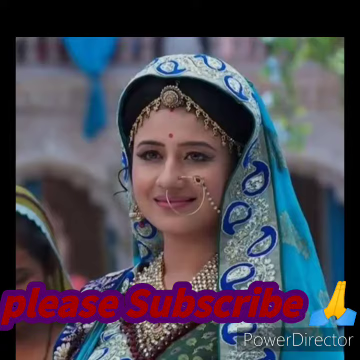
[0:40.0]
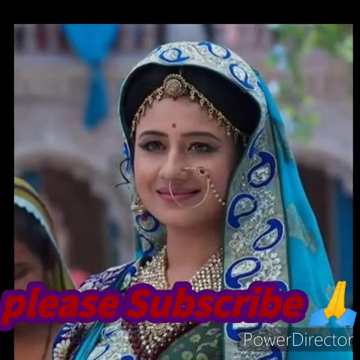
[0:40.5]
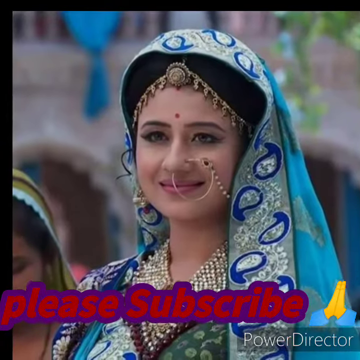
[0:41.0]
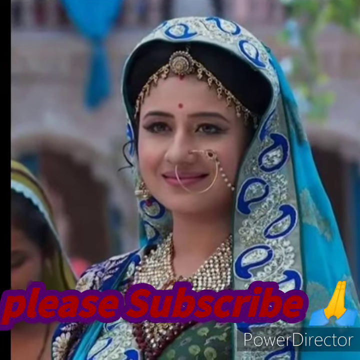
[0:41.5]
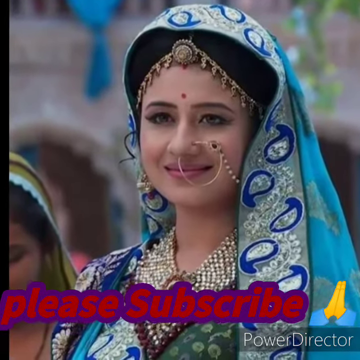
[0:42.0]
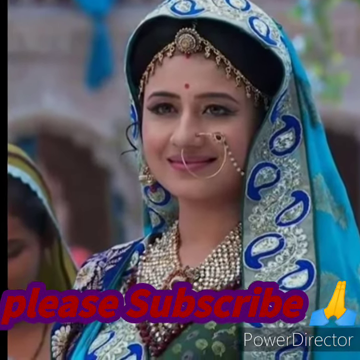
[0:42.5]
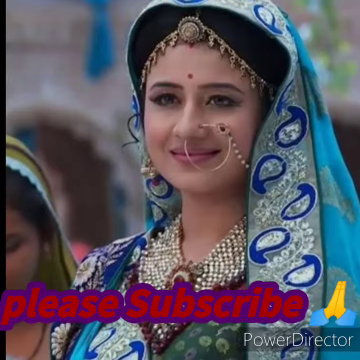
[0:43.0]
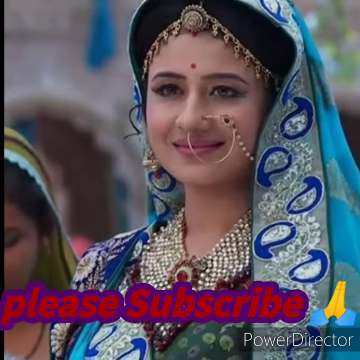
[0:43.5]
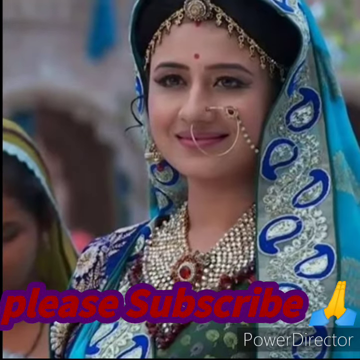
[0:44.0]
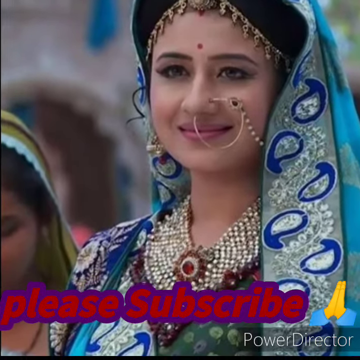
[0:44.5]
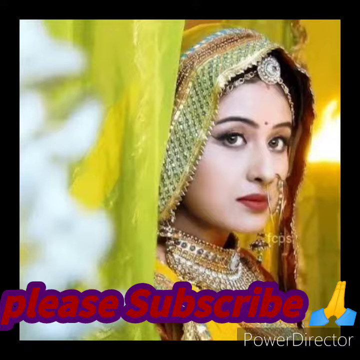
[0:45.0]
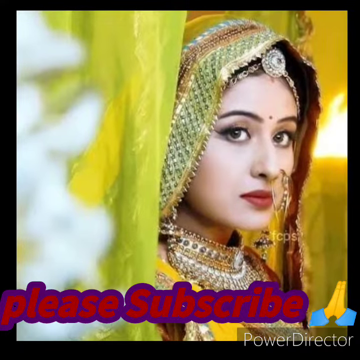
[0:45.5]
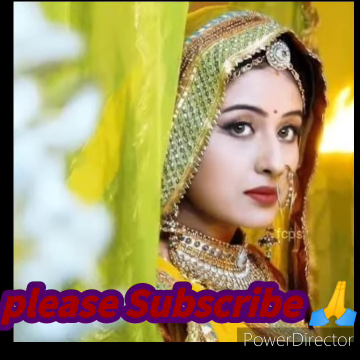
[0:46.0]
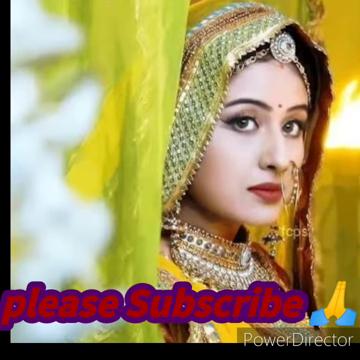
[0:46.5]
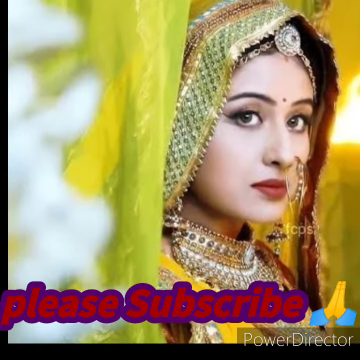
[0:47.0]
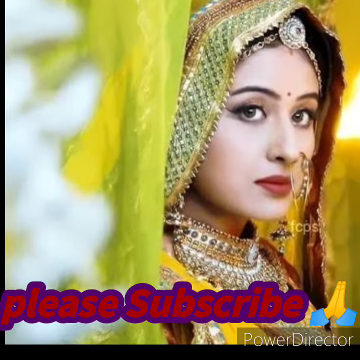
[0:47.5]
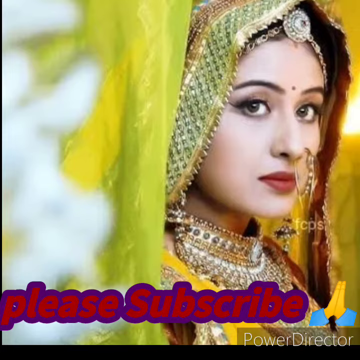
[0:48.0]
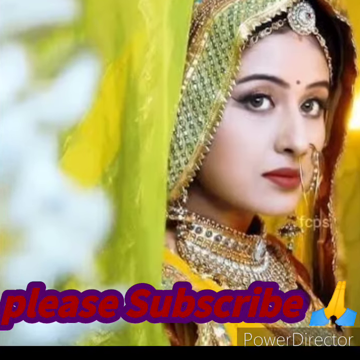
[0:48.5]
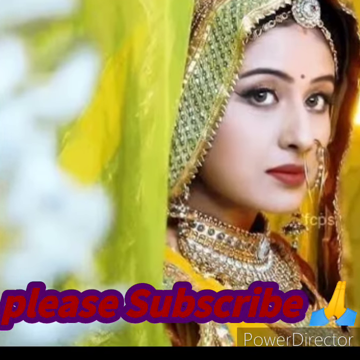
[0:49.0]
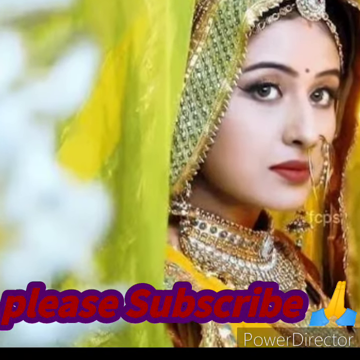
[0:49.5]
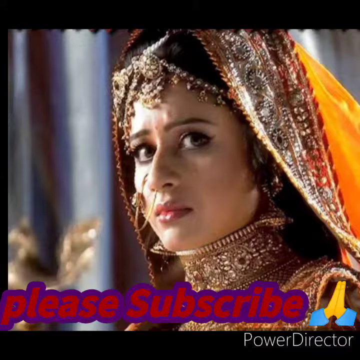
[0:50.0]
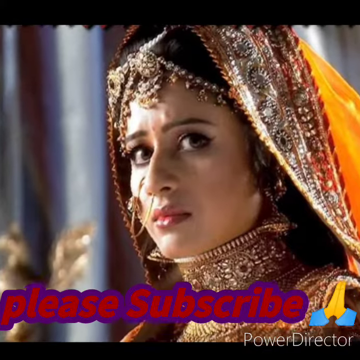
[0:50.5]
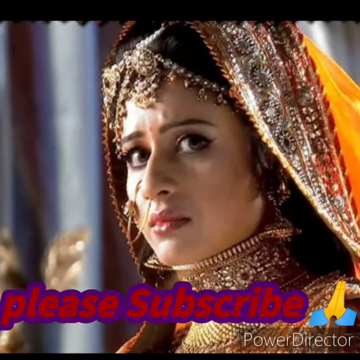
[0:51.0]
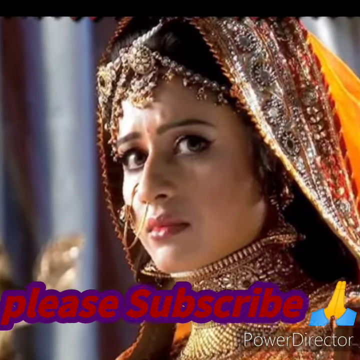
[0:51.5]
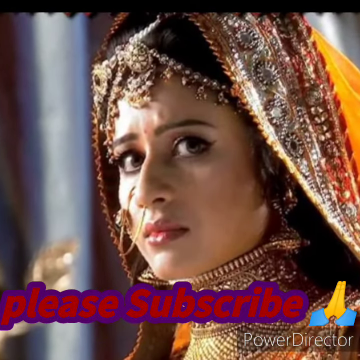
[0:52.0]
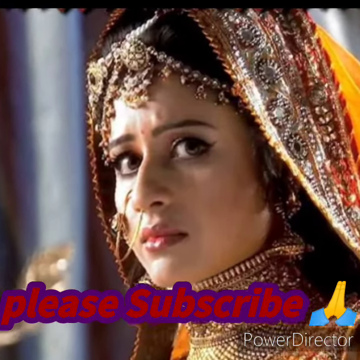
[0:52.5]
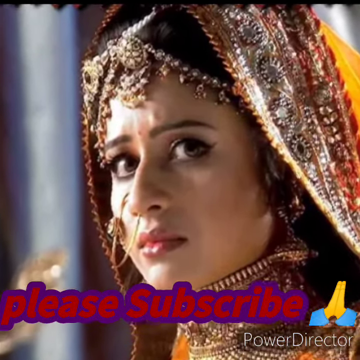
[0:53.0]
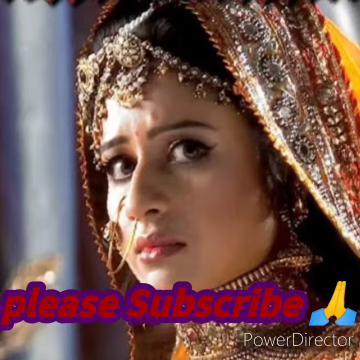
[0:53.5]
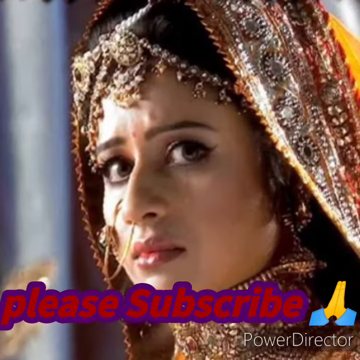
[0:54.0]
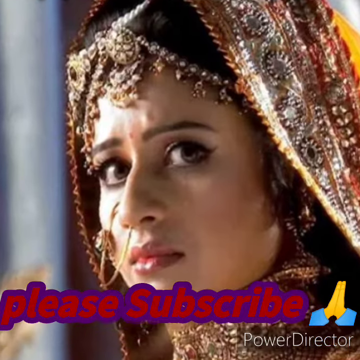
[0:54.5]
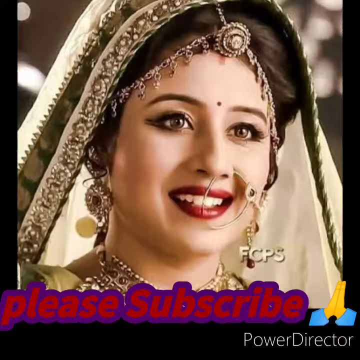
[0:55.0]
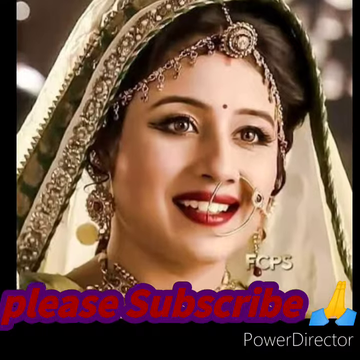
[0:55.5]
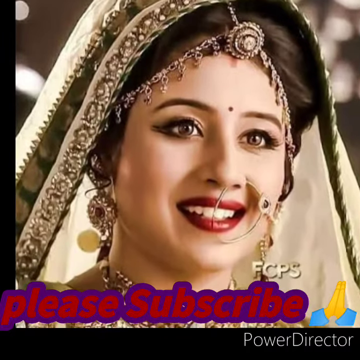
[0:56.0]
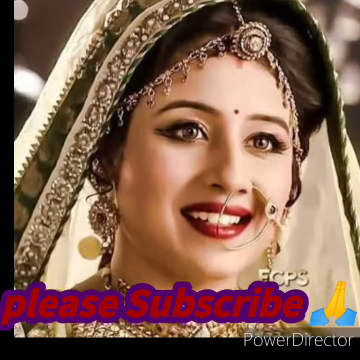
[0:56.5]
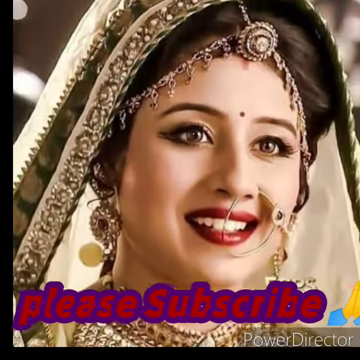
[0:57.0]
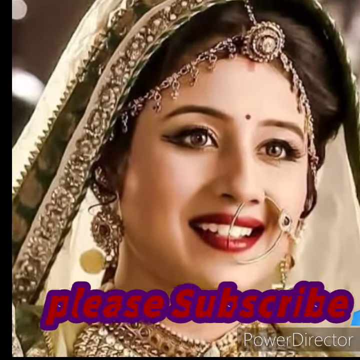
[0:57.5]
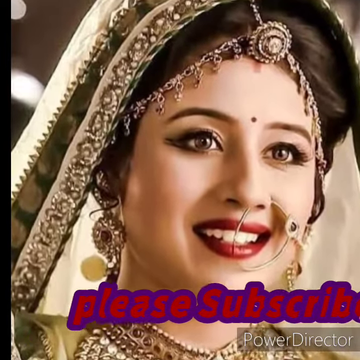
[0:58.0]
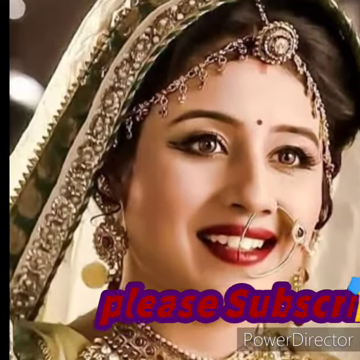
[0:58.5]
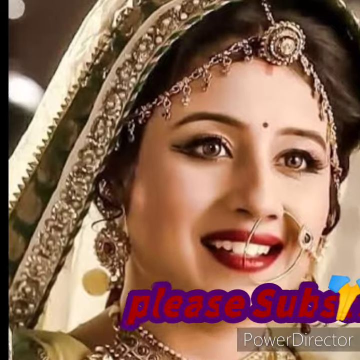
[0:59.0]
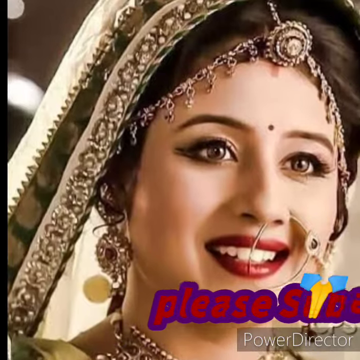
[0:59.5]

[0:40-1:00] A woman in traditional Indian clothing has a blue scarf draped around her head, a red dot in the middle of her forehead, and a huge hoop in her nose attached to a chain that goes to her ear. She is smiling and wears a gold necklace. A woman in yellow and gold also has a hoop in her nose attached to her earring, a red dot, and a gold necklace; she is kind of peeking out from behind a yellow curtain with a slight smile. Another woman wears a darkish gold color and a kind of turtleneck-style jewelry piece, with a hoop nose ring attached to her ear. She is not smiling and has kind of a mean look. Another woman wears whitish-tan Indian clothing, with a dot on her forehead, bright red lipstick, and a large hoop nose piercing attached to gold earrings. She is smiling, showing her teeth, and looks very happy.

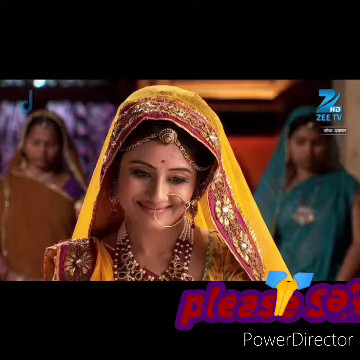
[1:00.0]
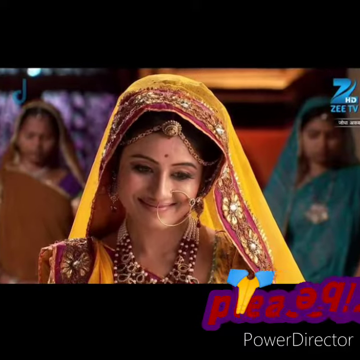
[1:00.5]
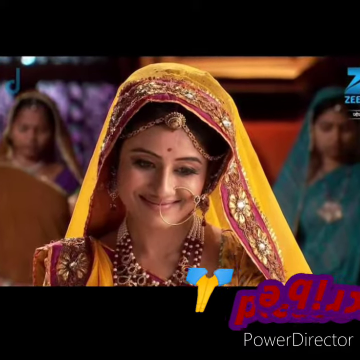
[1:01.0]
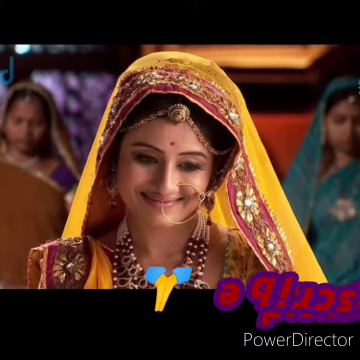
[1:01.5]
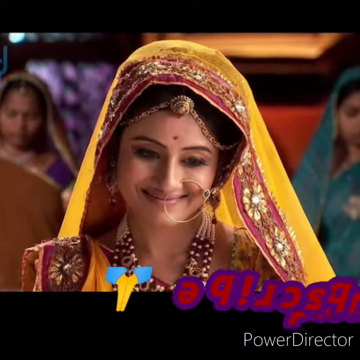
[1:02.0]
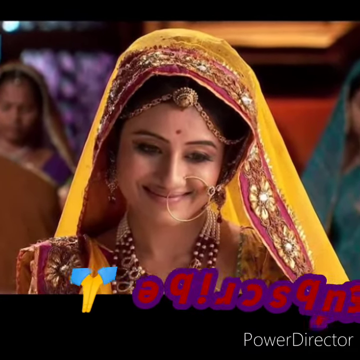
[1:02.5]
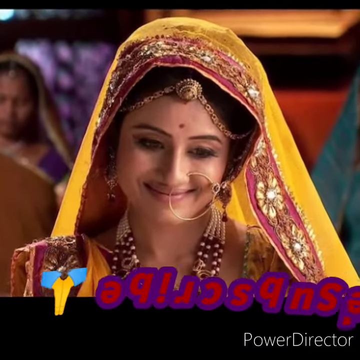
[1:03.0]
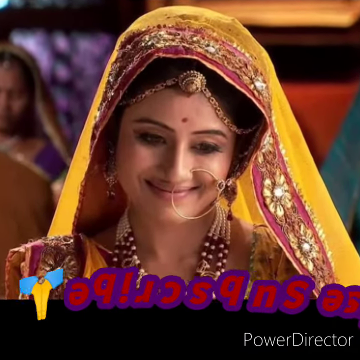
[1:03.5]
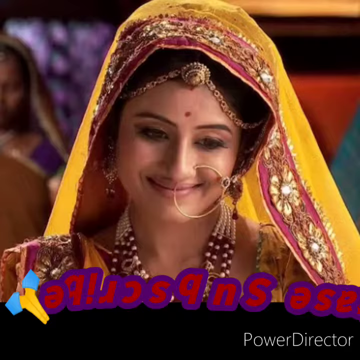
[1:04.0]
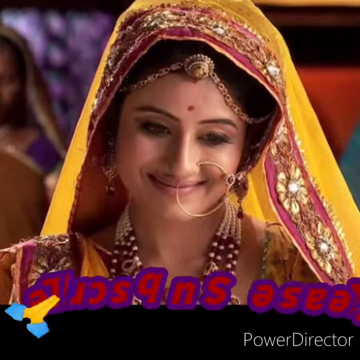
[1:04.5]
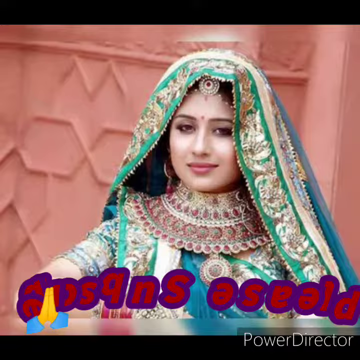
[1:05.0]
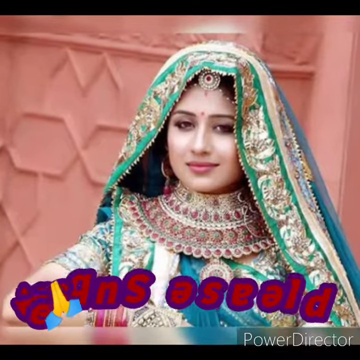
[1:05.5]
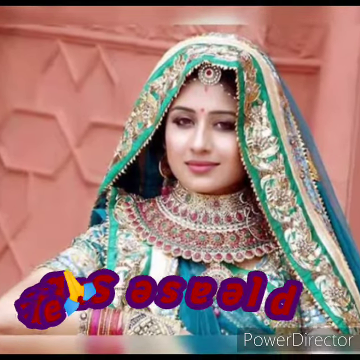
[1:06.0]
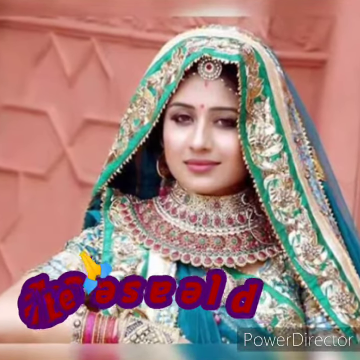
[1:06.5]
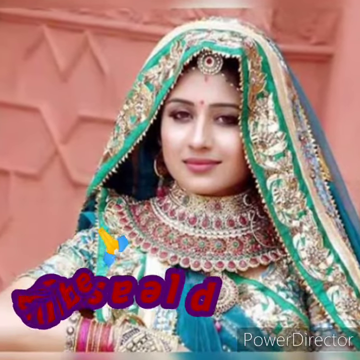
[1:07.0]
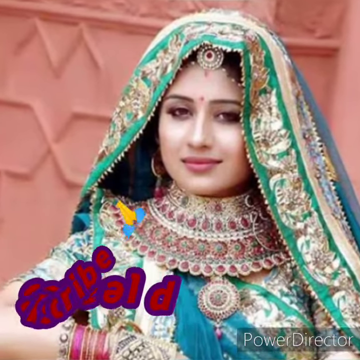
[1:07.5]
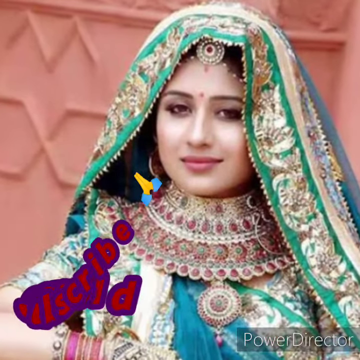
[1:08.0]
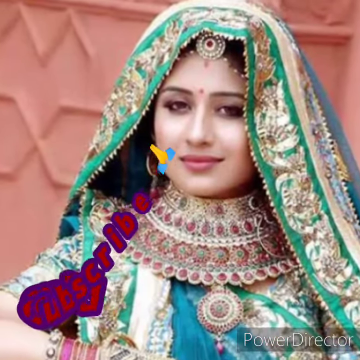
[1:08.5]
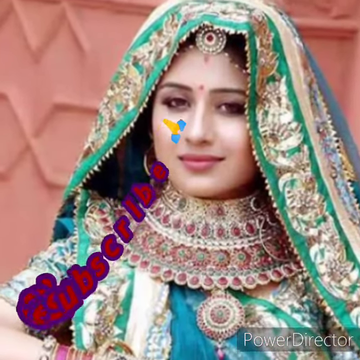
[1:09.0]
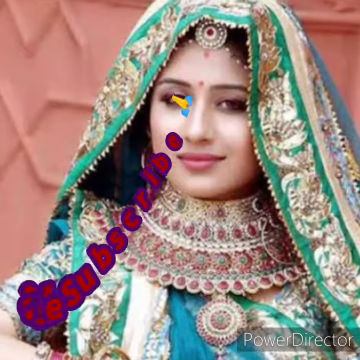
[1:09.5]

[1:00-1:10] A woman stands in front wearing yellow traditional Indian attire, smiling and looking down, with a hoop in her nose attached to her earring. Behind her are two women wearing what is apparently called a sarong, draped over the shoulder; one is brown and the other green-teal. Another woman wears greenish, possibly emerald, attire. She has no nose piercing but wears large hoop earrings, a jewel on her forehead, and the red dot on her forehead, along with a choker or turtleneck-style jewelry piece. Her outfit is bluish teal-green with pink and white, with kind of small floral designs. She is smiling slightly, almost smirking, and her makeup looks kind of pale. A scarf draped around her head has a lot of detail, with what look like flowers, and some chiffon. She stands in front of a pinkish-orange building.